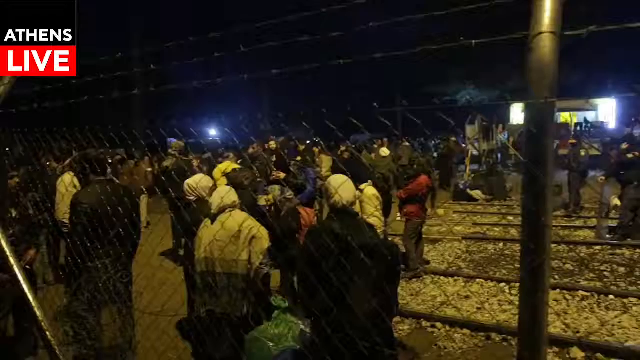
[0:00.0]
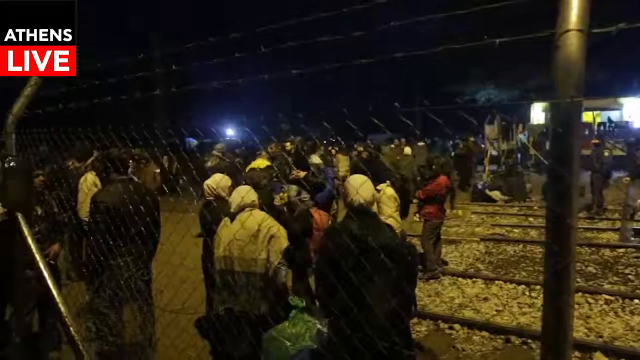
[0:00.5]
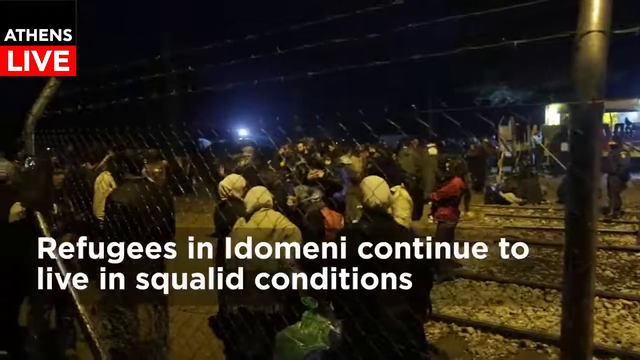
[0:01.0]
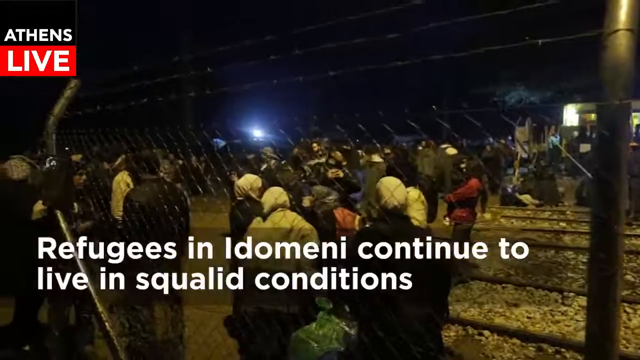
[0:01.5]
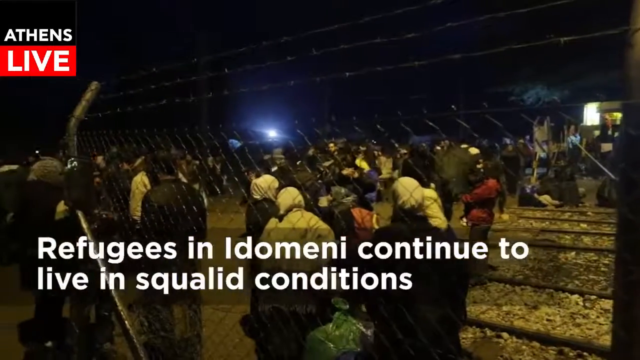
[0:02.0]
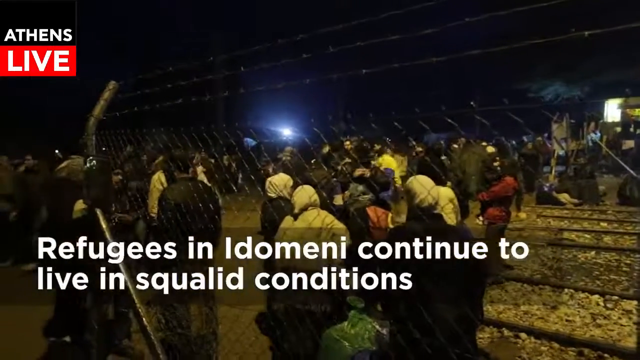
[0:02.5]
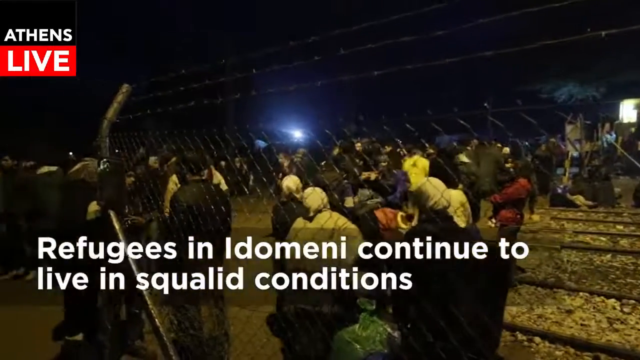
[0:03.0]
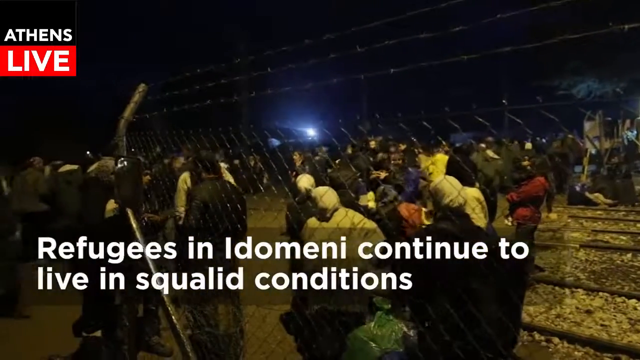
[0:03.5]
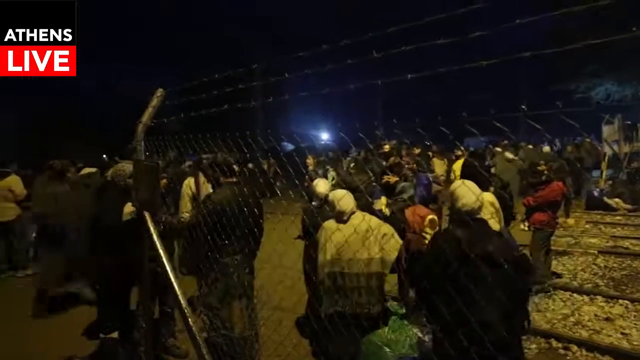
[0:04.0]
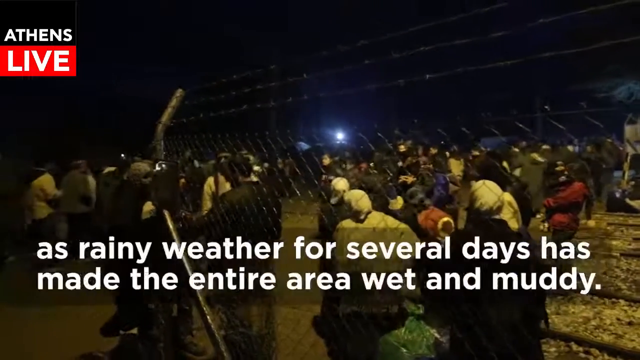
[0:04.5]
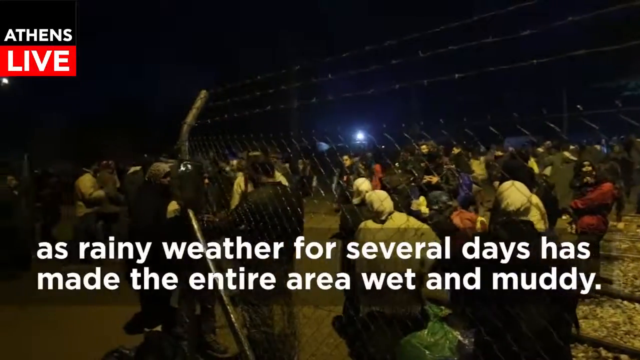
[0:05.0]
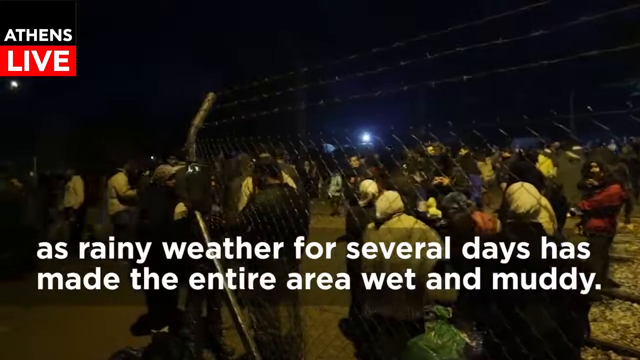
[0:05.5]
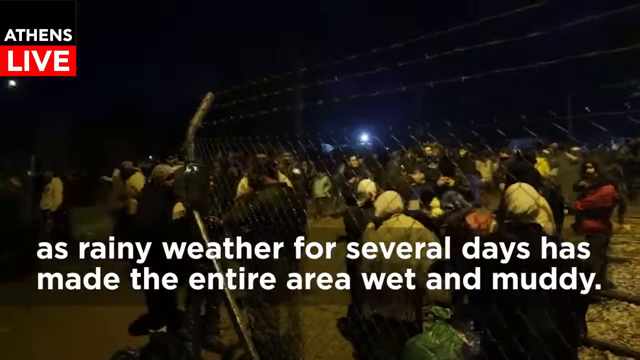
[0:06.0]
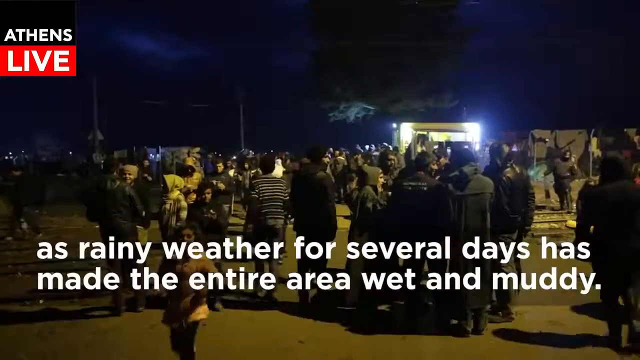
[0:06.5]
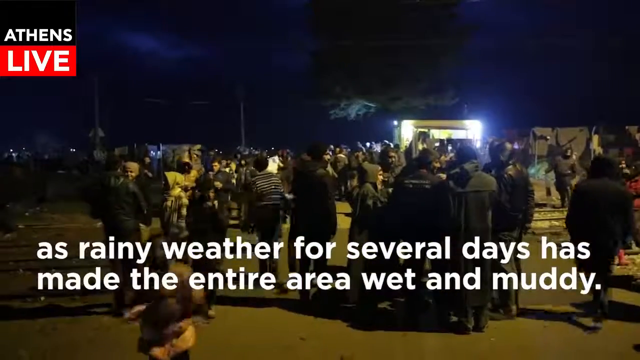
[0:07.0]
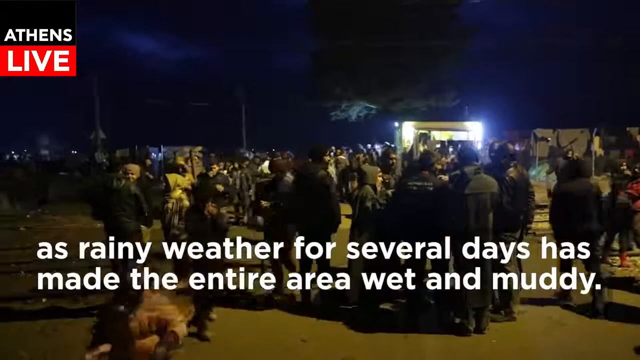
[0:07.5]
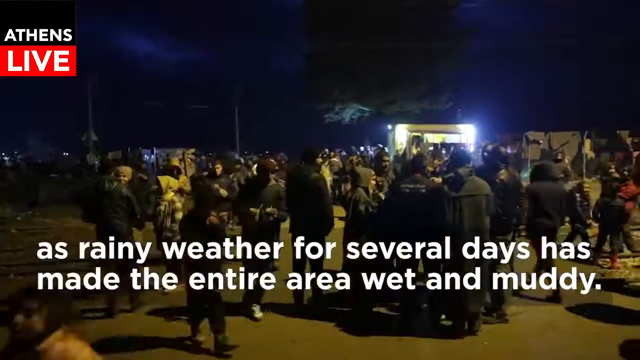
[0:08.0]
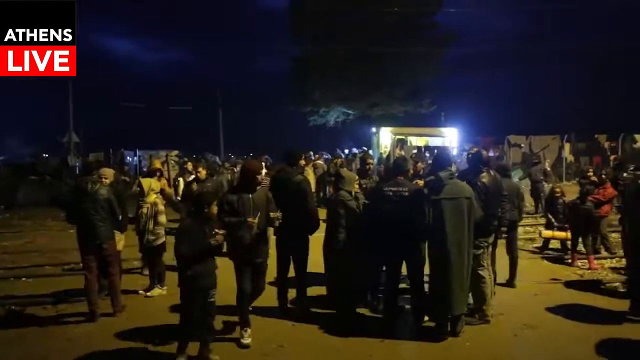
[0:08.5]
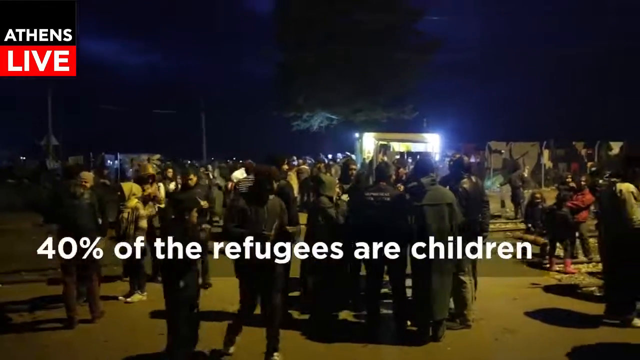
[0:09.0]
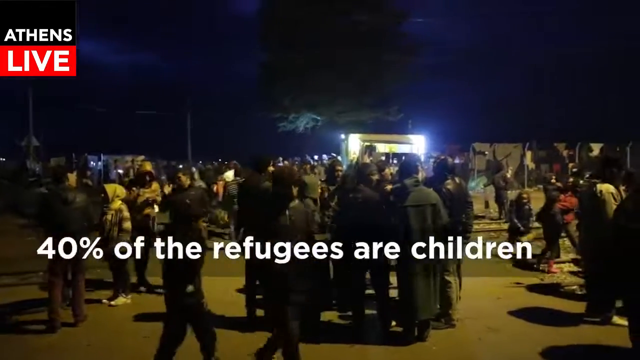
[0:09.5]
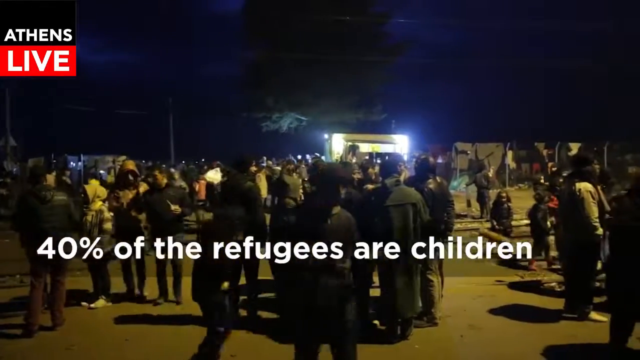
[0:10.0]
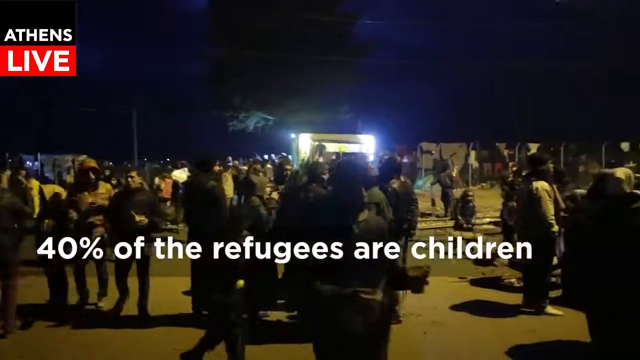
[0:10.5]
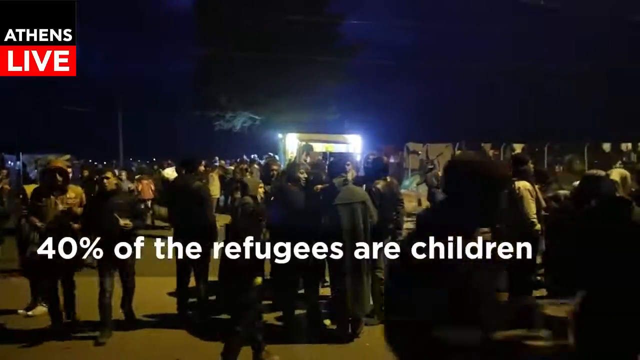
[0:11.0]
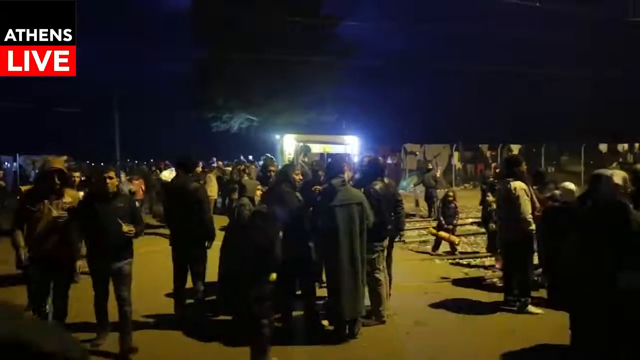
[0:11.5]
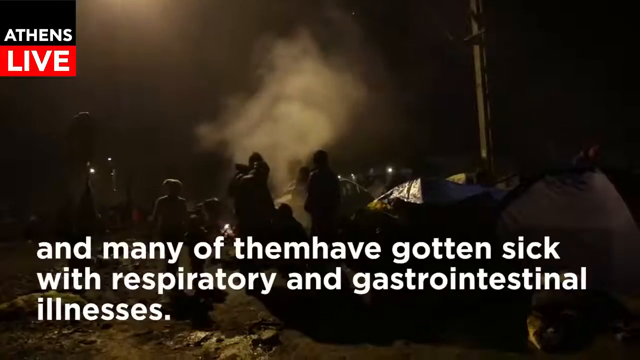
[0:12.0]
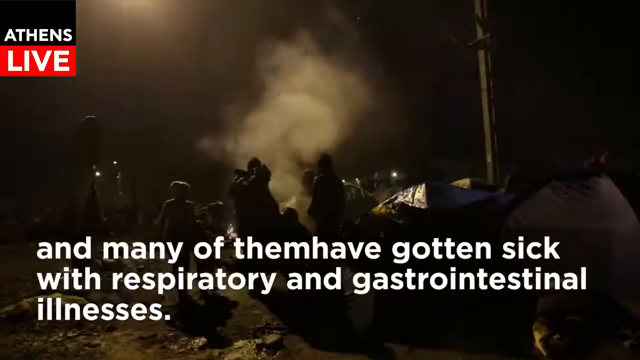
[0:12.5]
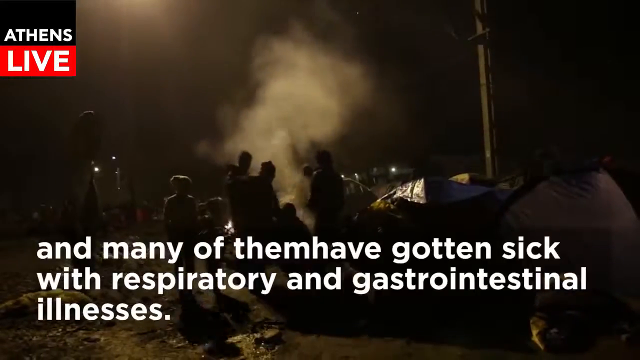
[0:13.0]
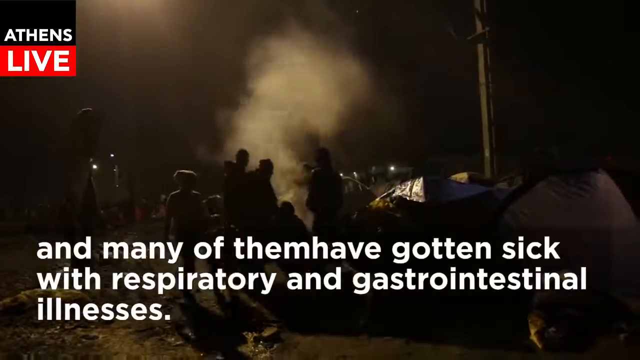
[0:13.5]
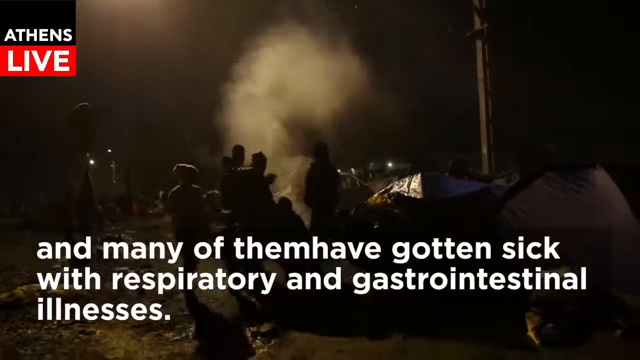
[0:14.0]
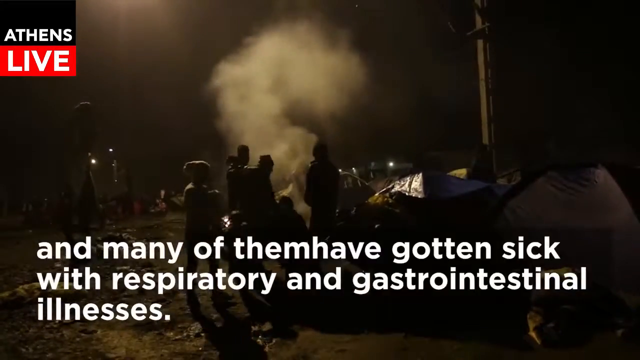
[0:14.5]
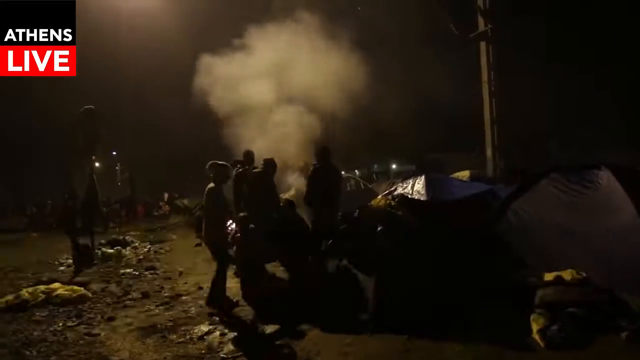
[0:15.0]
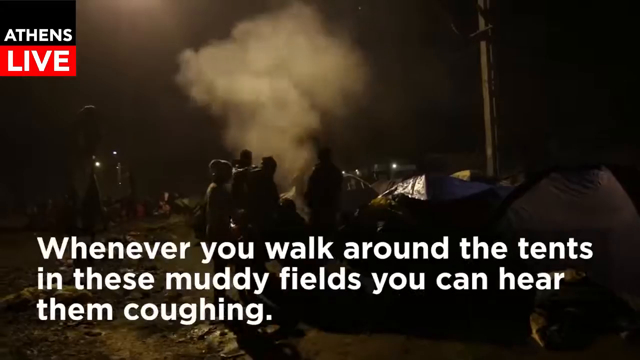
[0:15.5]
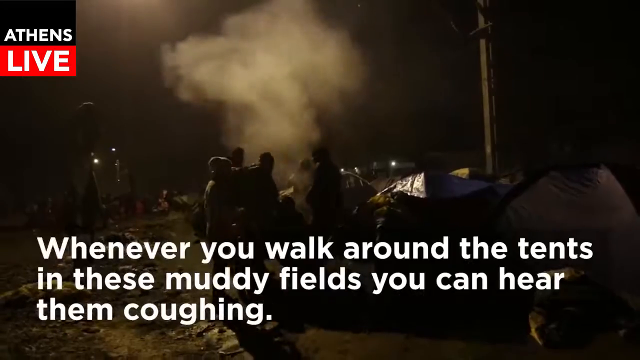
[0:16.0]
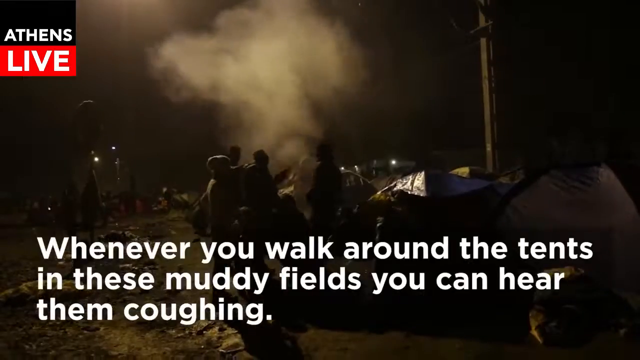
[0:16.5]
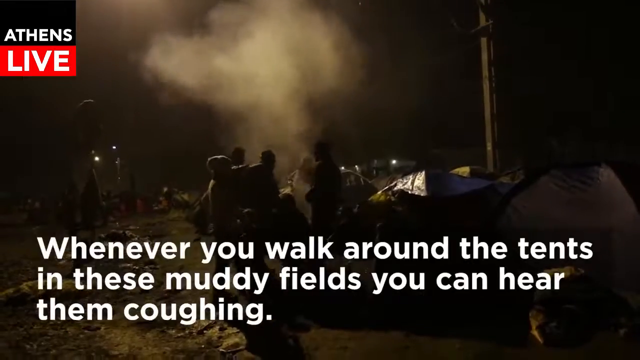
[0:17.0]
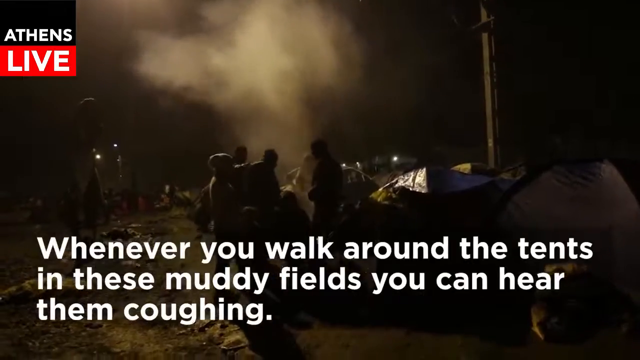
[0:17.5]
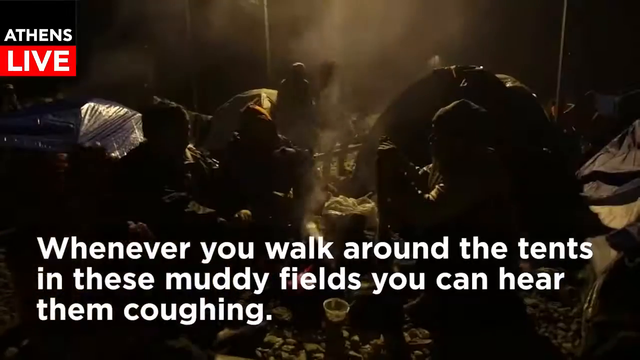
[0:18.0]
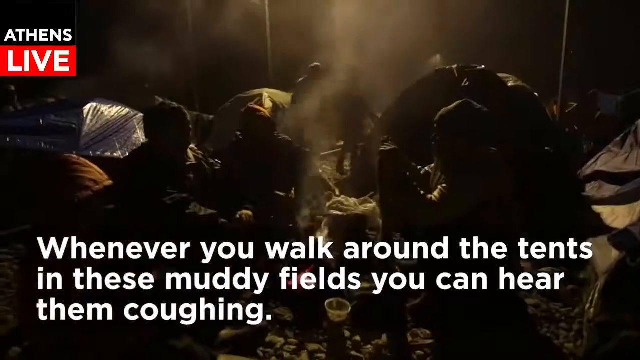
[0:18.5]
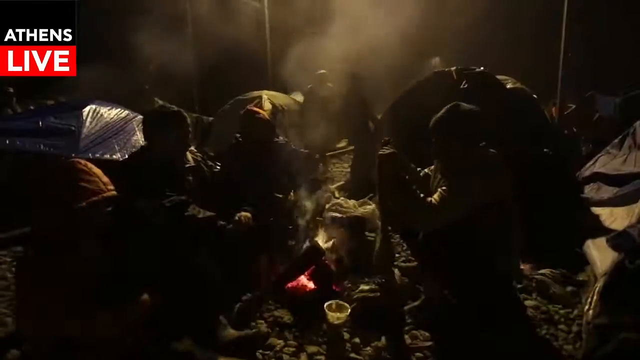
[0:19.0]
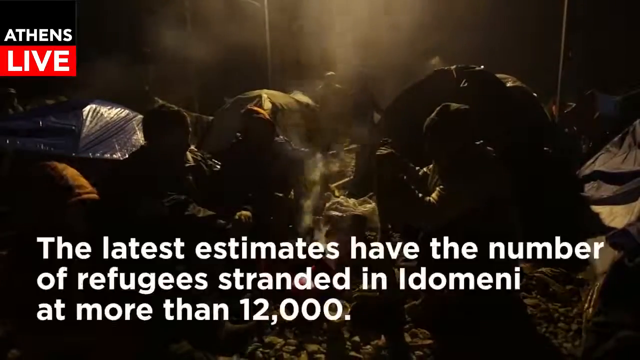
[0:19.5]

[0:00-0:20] At night, different views show what looks to be refugees and a large group of people standing around in an area with tents. "Afton5" appears in the top left. Captions along the video read: "refugees continue to live in squalid conditions as rainy weather for several days has made the entire area wet and muddy. 40% of the refugees are children and many of them have gotten sick with respiratory and gastrointestinal illnesses. Whenever you walk around the tents in these muddy fields, you can hear them coughing." Various views and angles show the people with their tents in these conditions. Everyone seems to have some type of jacket or hoodie on, and a log fire is burning.